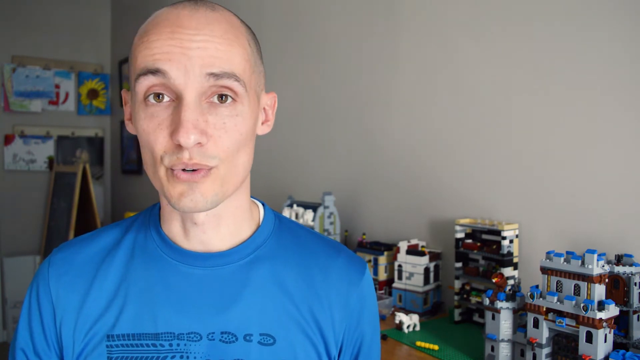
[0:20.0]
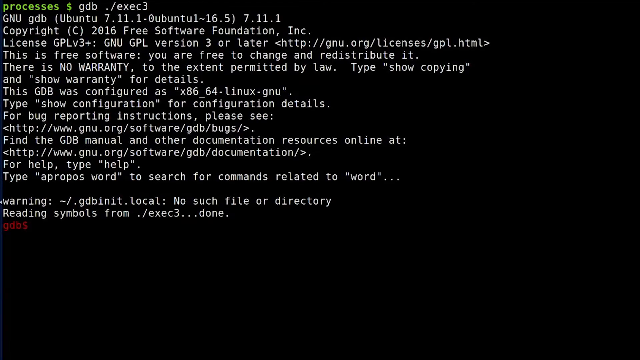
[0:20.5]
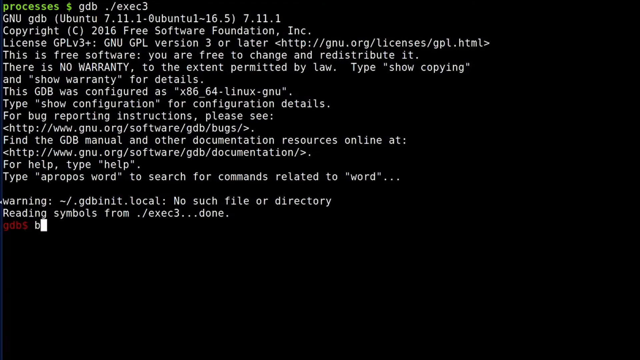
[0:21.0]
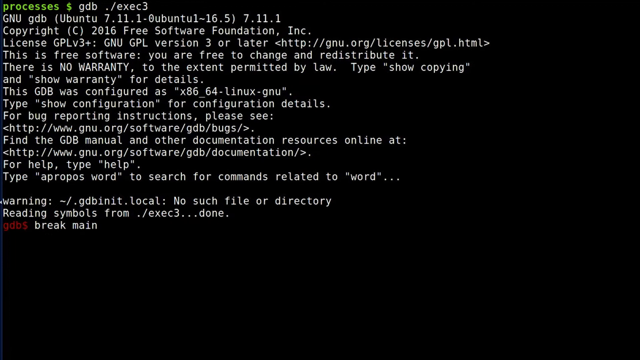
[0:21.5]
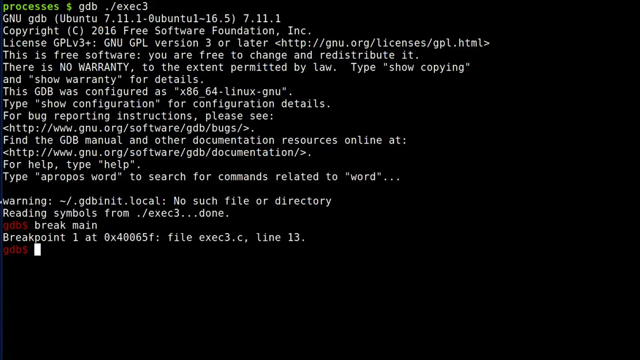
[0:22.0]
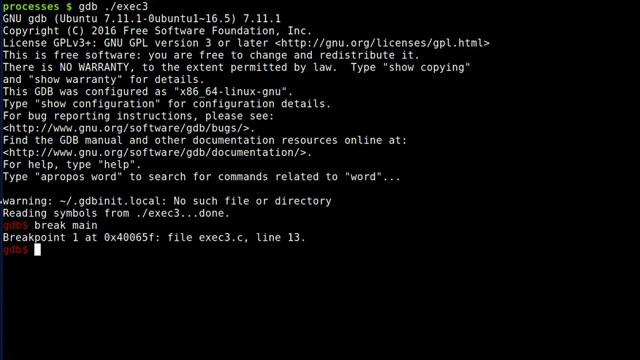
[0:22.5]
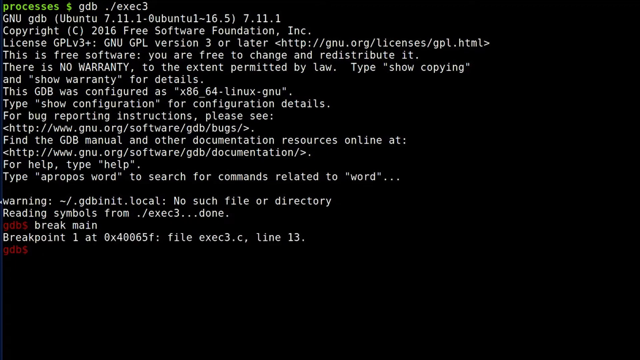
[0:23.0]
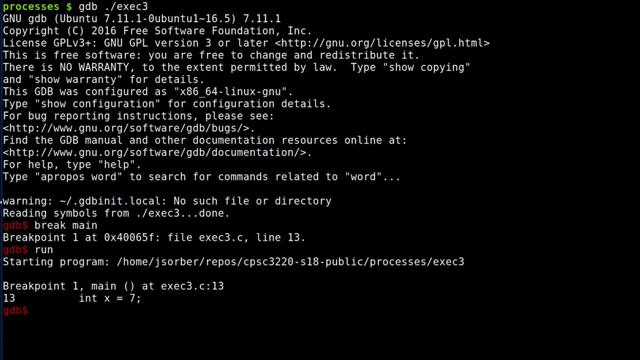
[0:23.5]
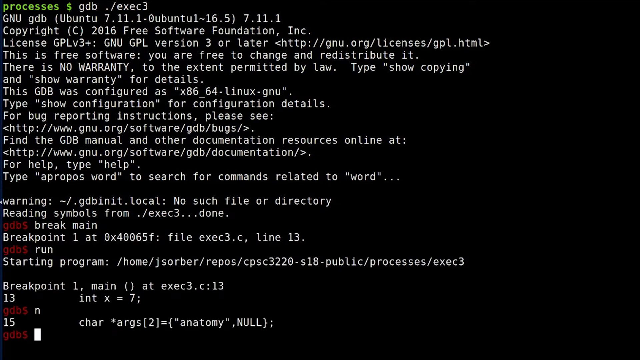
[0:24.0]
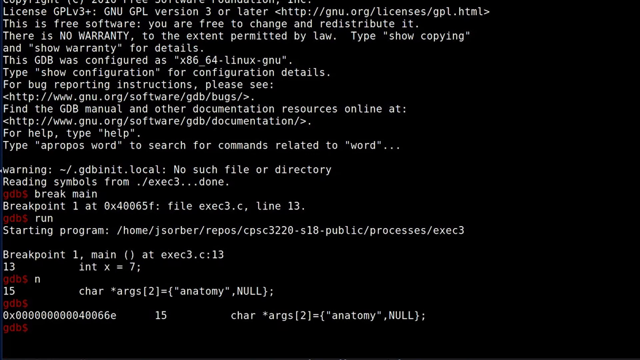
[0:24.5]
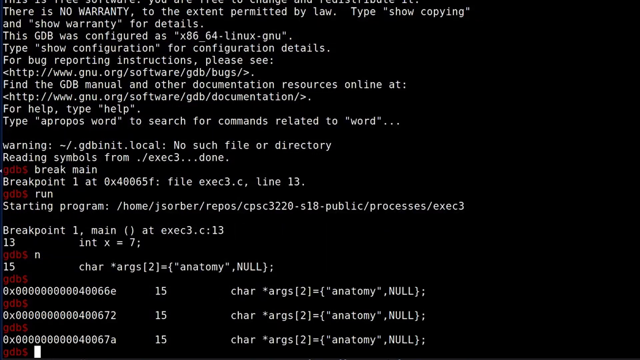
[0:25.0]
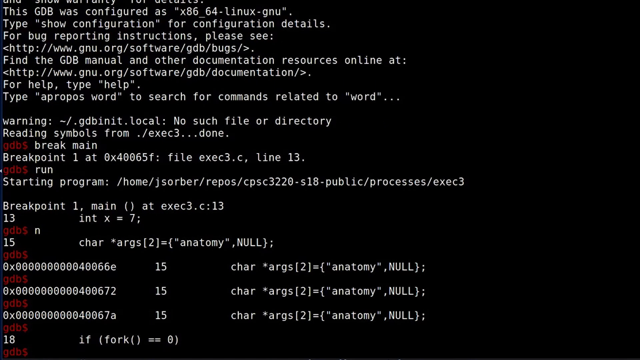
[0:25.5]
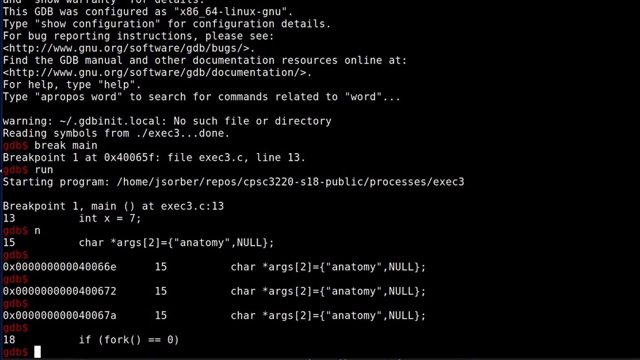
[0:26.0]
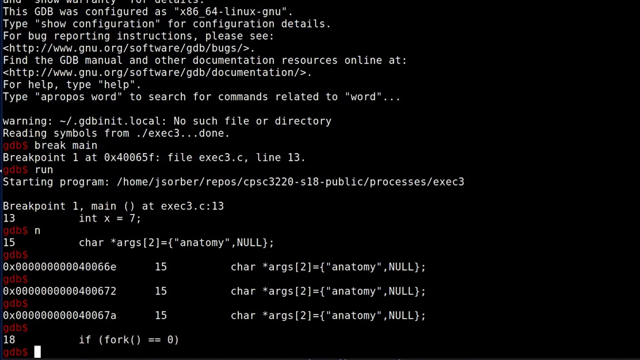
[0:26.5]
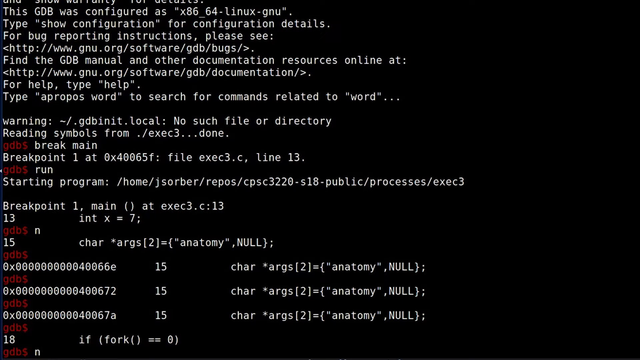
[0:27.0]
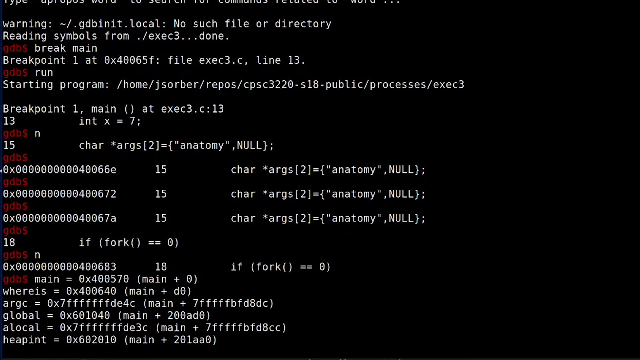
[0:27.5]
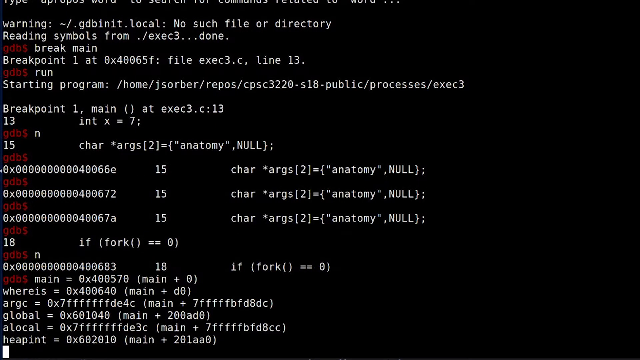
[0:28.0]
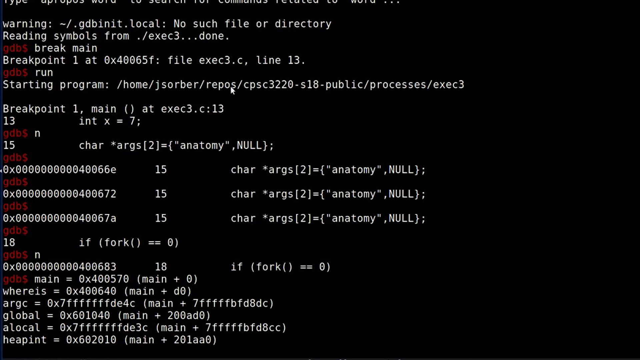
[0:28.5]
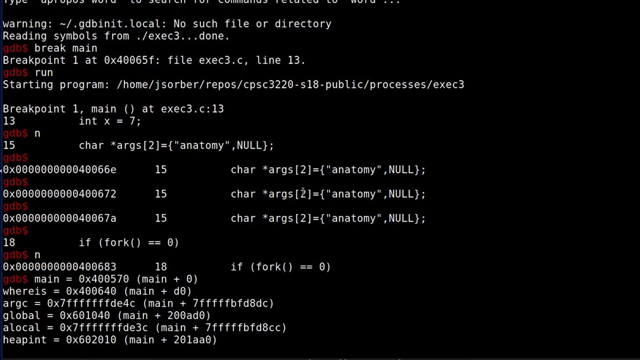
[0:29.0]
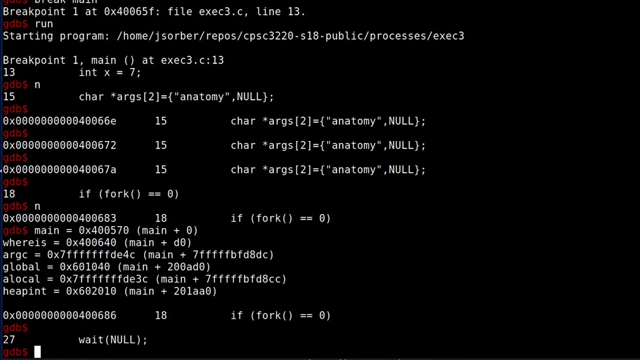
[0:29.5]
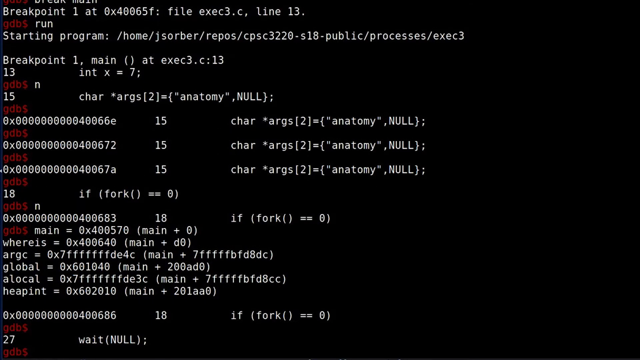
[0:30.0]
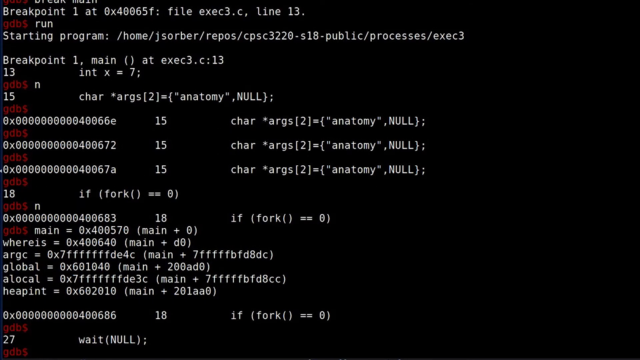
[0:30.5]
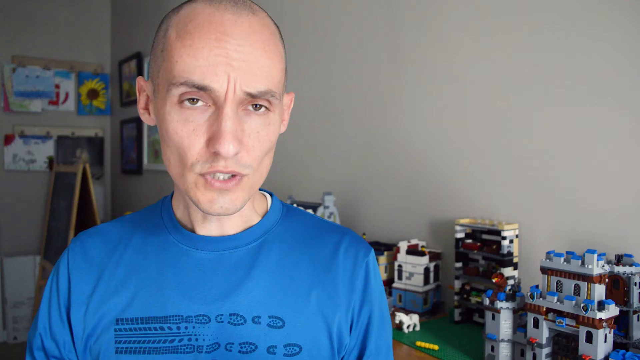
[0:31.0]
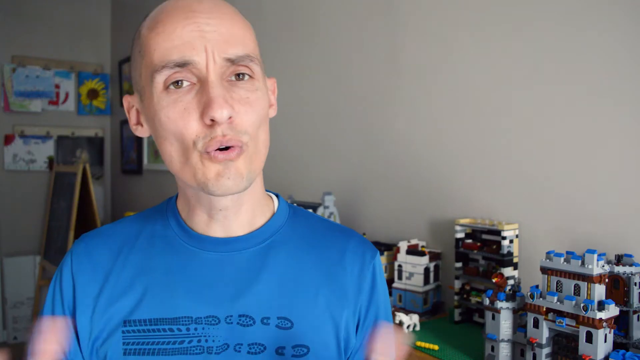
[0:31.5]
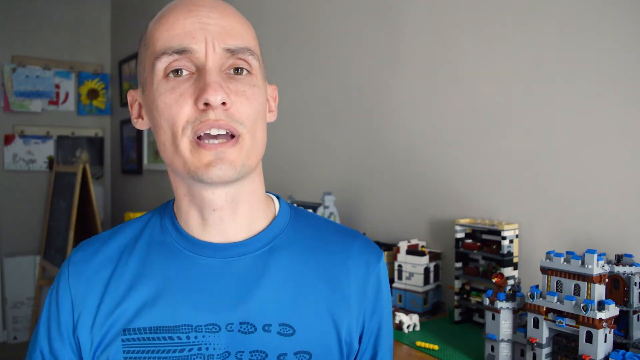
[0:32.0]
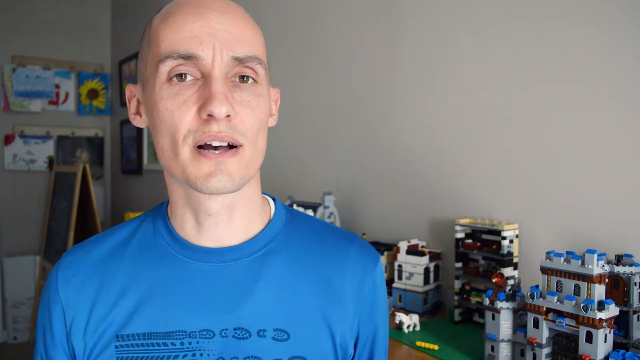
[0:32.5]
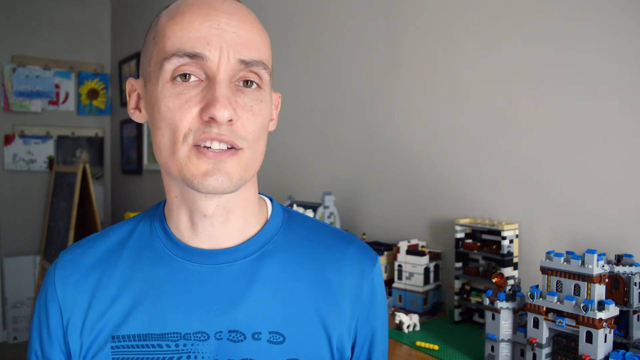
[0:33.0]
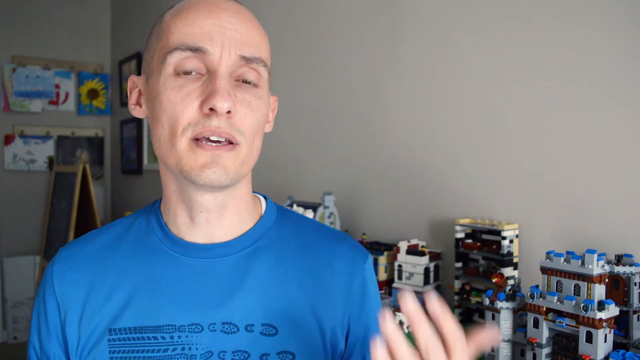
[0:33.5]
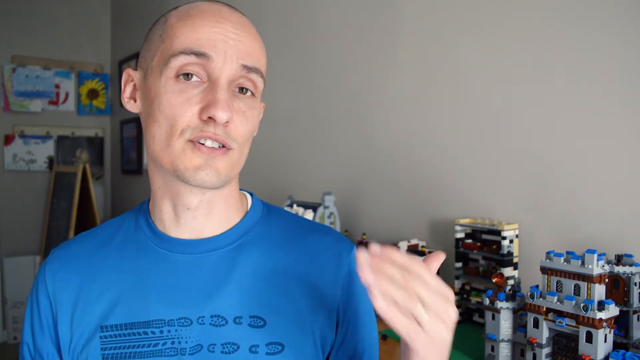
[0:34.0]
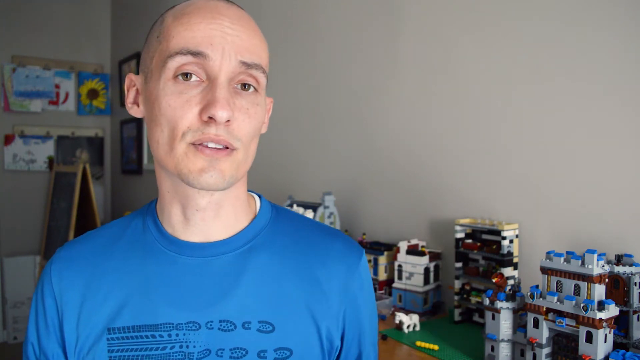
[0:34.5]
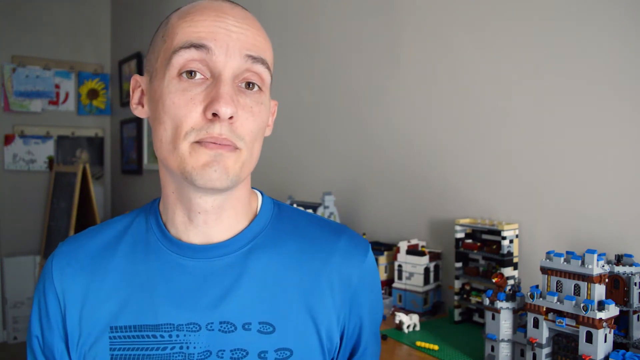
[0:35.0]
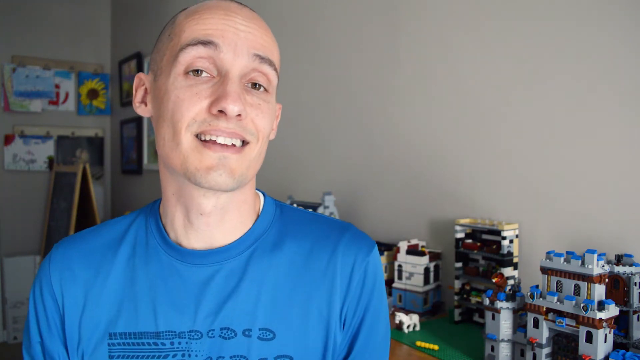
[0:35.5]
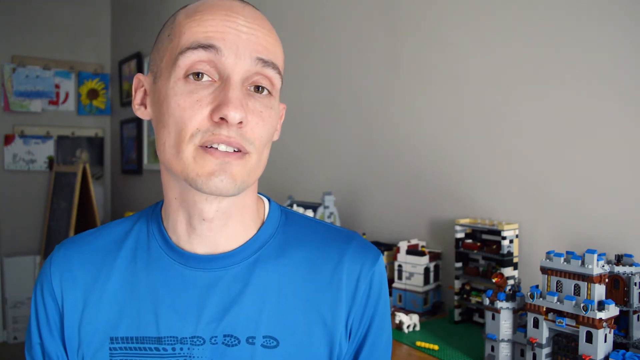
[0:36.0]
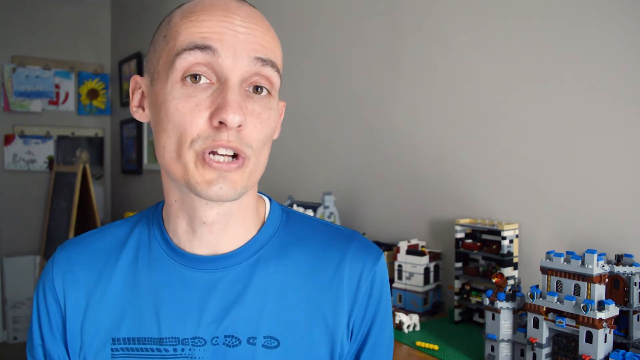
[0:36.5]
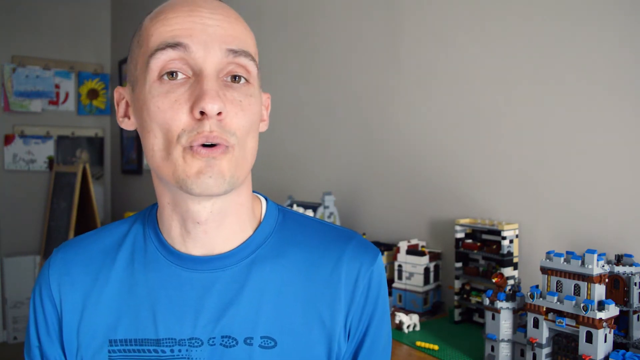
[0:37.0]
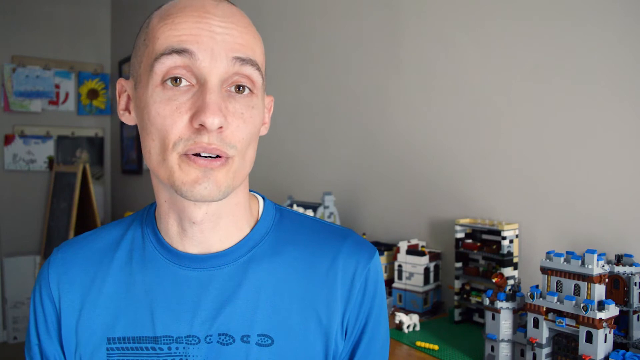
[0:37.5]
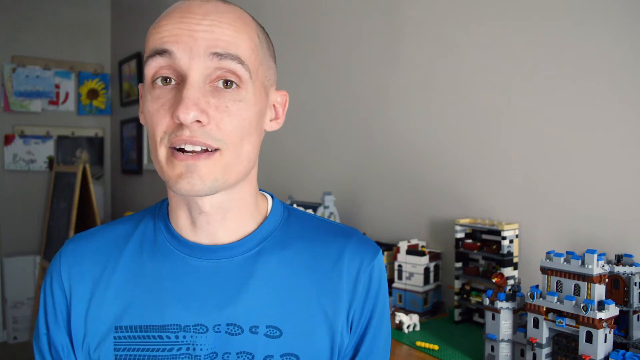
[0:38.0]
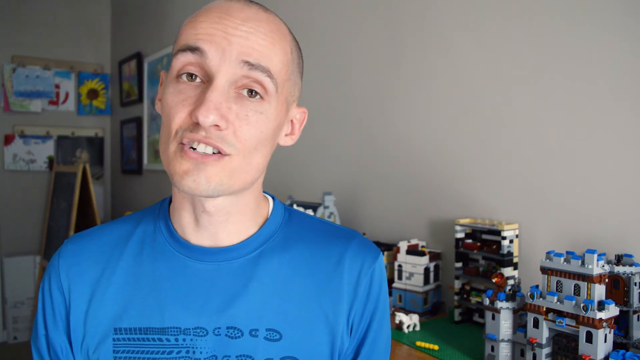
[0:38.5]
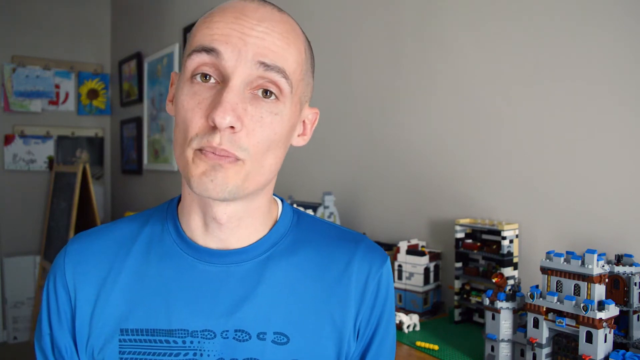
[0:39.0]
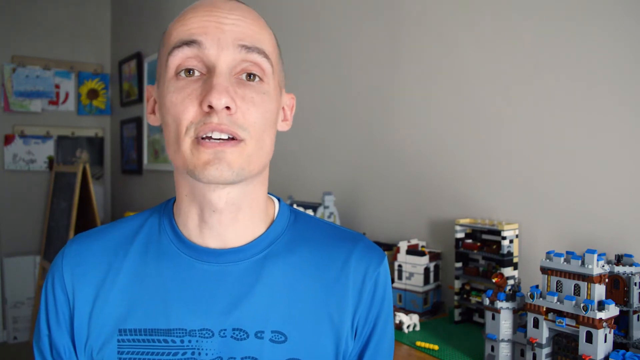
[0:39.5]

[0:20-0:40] The shot opens on what seems to be a coding interface. After a few seconds, the man appears: a man of white descent in a blue shirt. On the left, there seem to be pictures related to small children hanging on the wall. On the right, in the background behind him, Lego bars have been used to create house-like structures on top of a table. He is the only person, speaking, and he seems to be explaining concepts to do with coding.